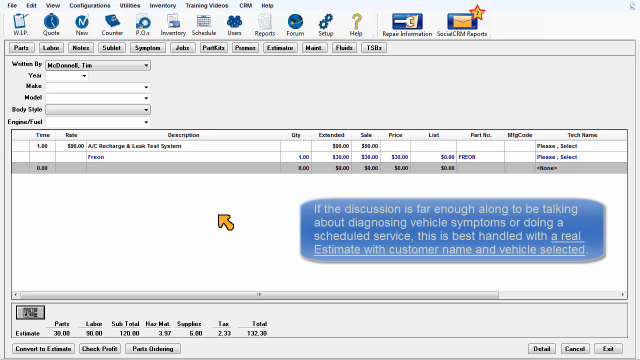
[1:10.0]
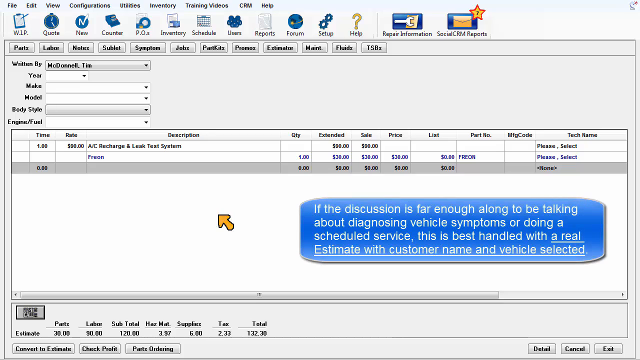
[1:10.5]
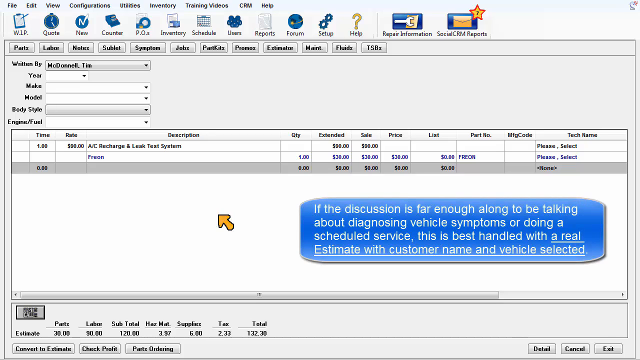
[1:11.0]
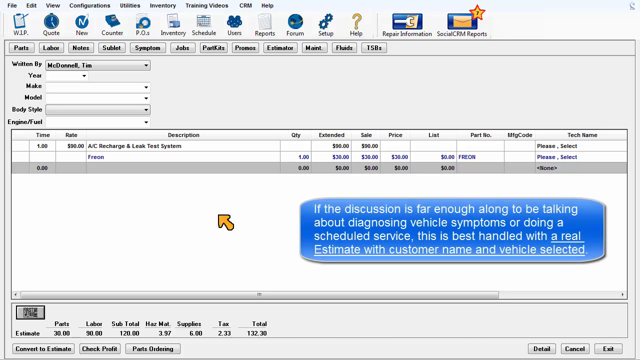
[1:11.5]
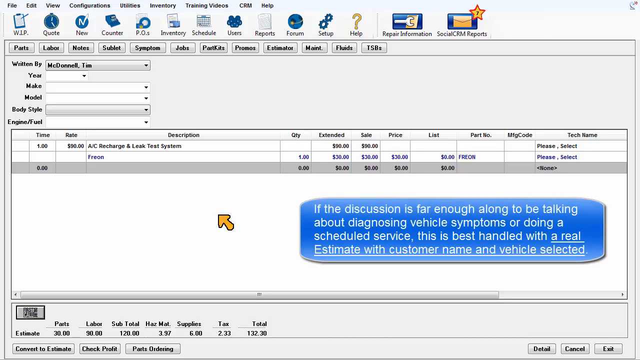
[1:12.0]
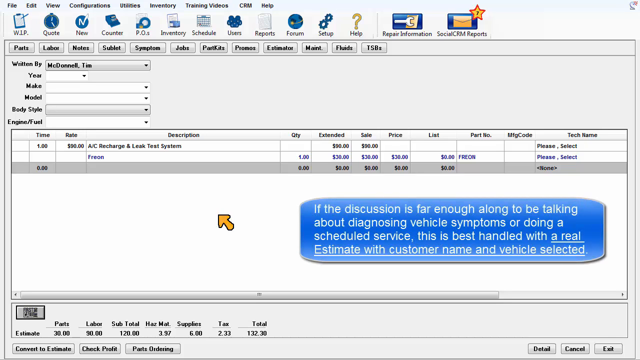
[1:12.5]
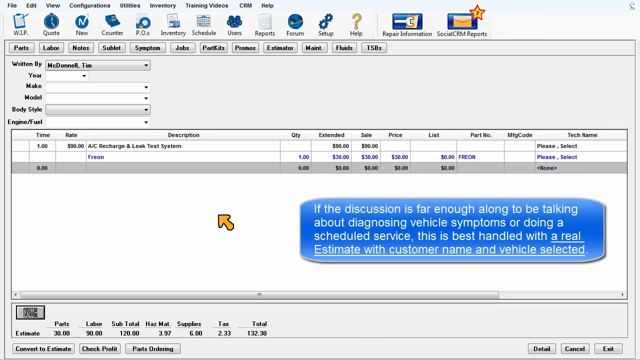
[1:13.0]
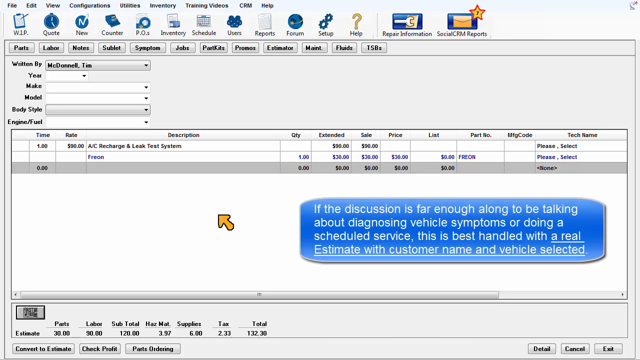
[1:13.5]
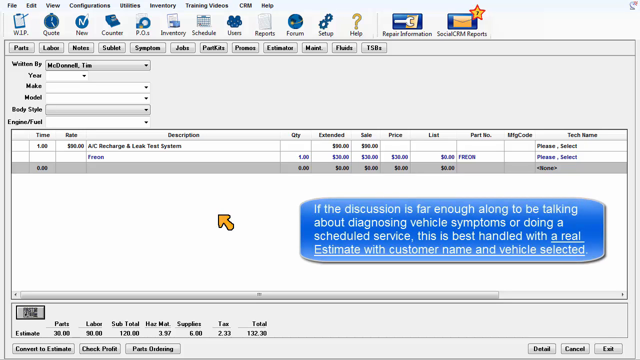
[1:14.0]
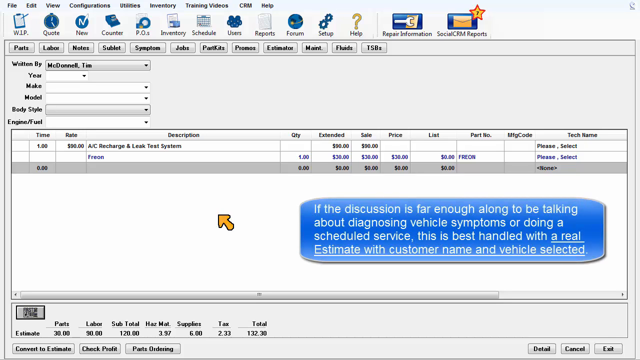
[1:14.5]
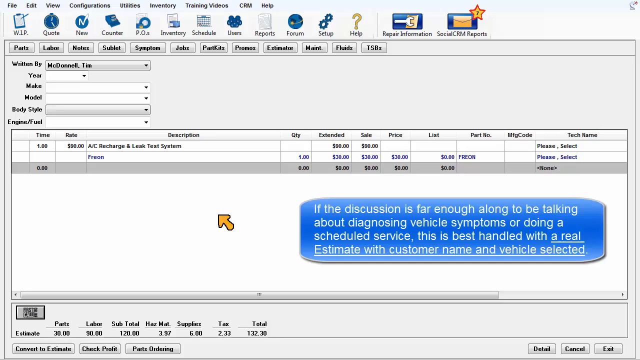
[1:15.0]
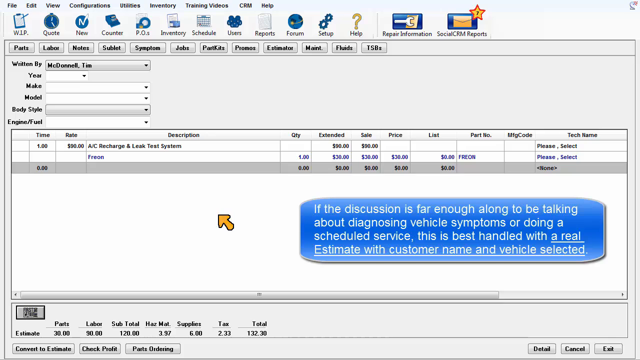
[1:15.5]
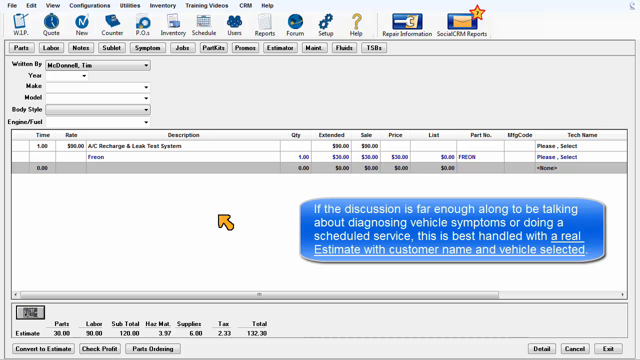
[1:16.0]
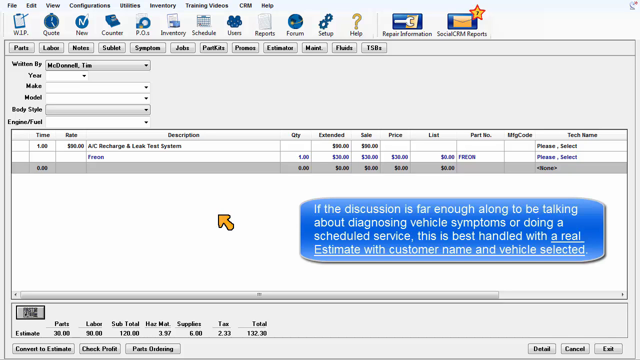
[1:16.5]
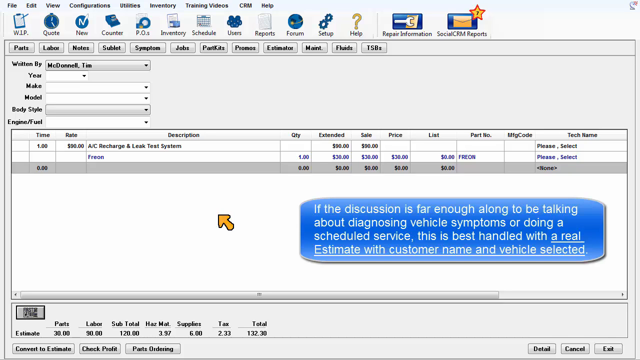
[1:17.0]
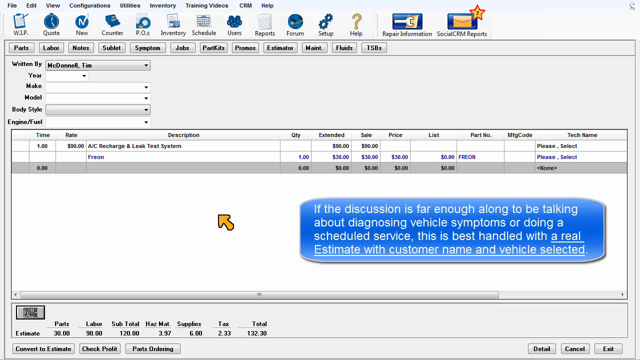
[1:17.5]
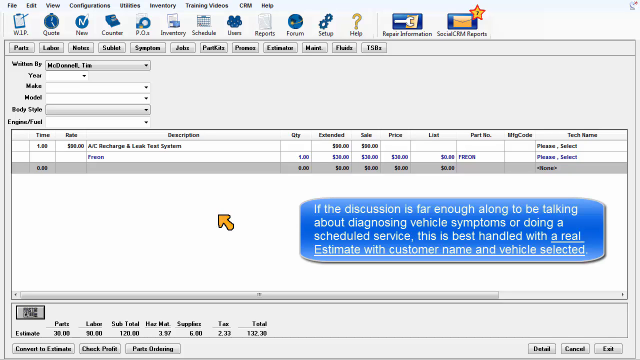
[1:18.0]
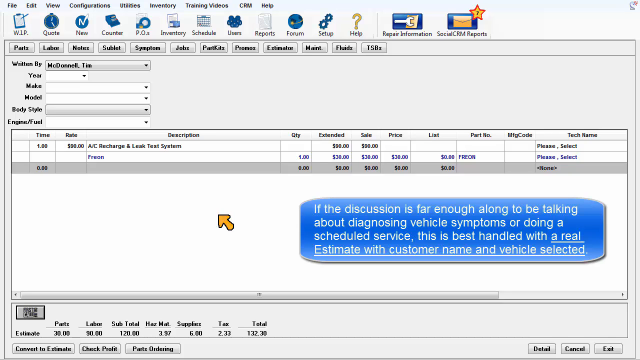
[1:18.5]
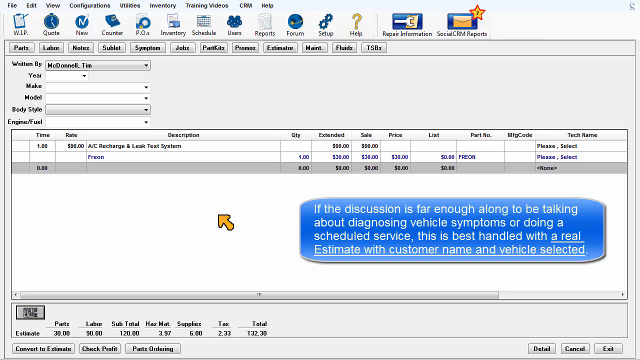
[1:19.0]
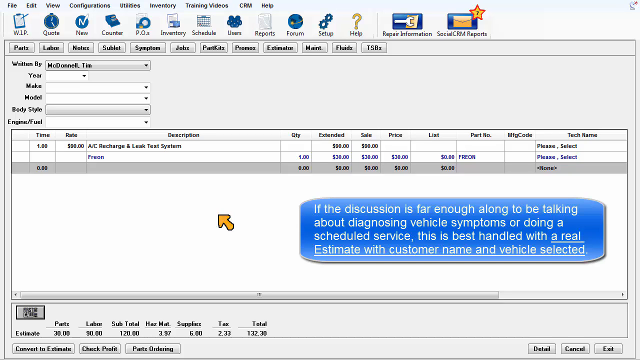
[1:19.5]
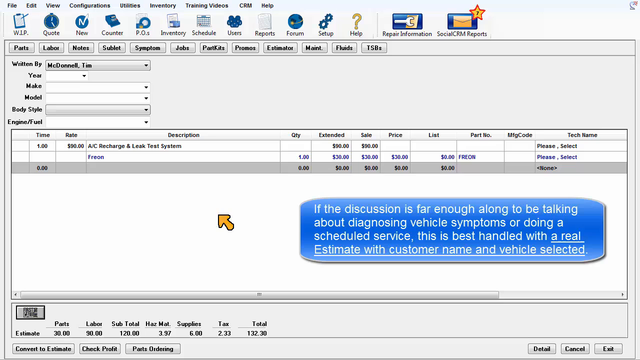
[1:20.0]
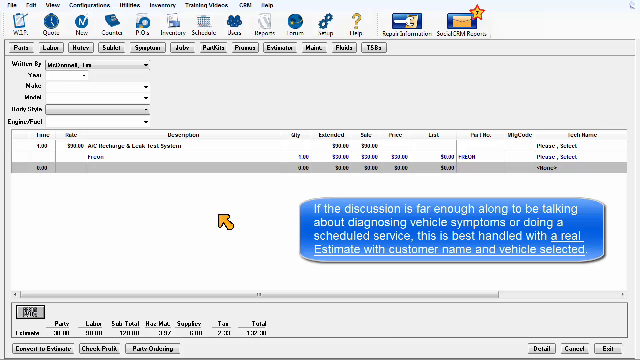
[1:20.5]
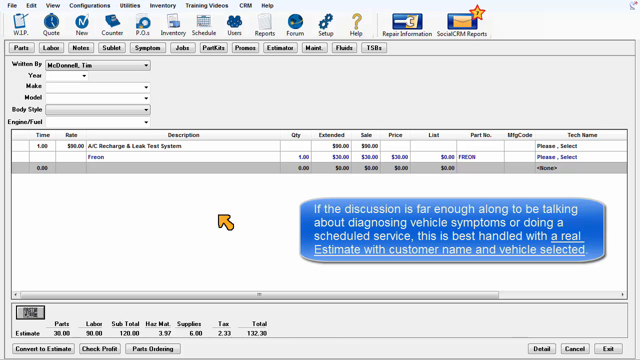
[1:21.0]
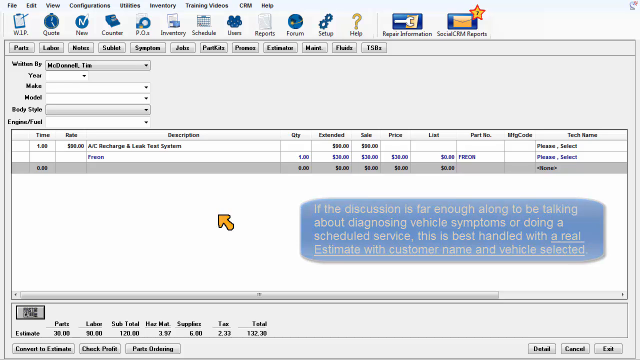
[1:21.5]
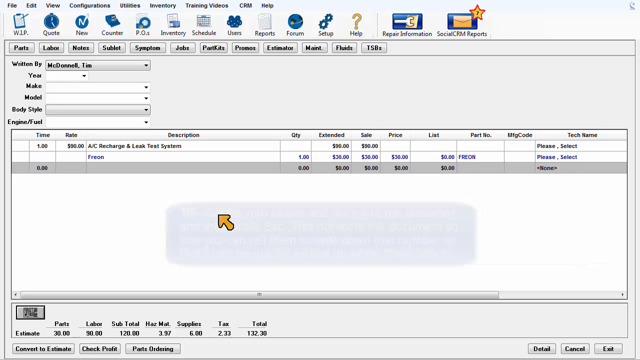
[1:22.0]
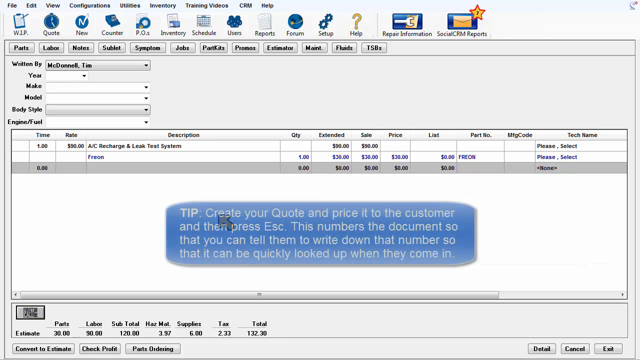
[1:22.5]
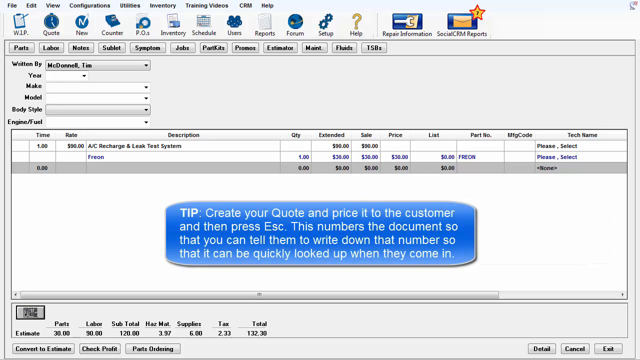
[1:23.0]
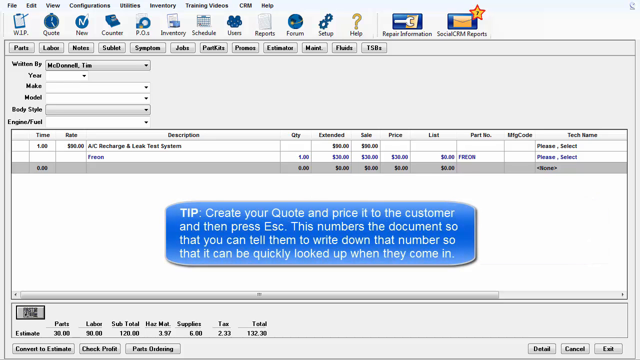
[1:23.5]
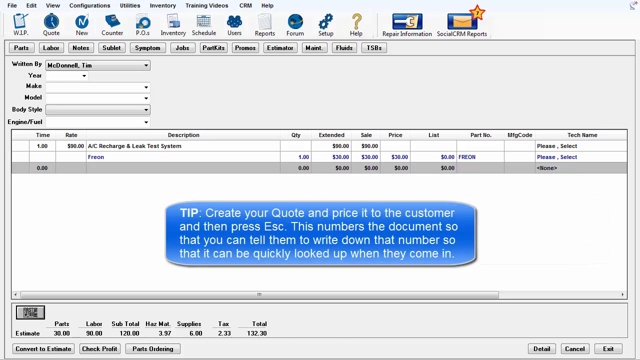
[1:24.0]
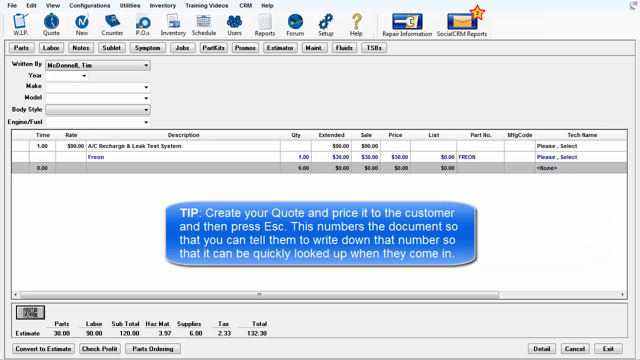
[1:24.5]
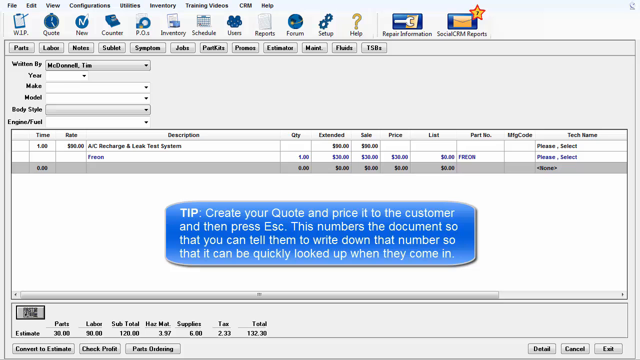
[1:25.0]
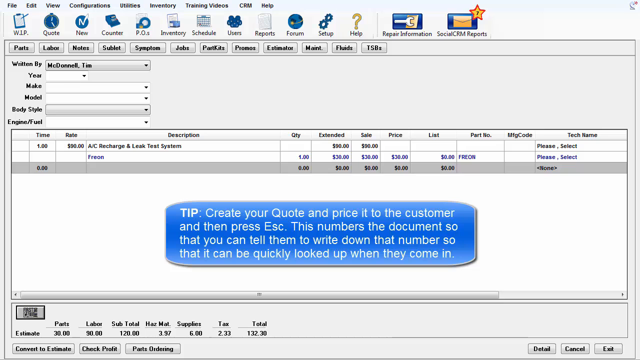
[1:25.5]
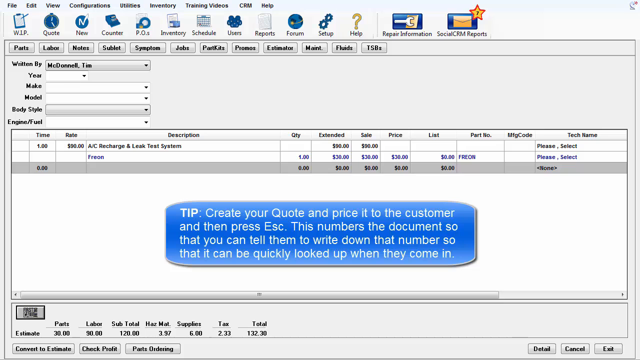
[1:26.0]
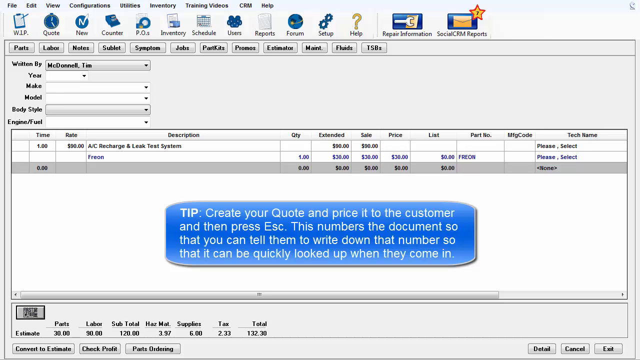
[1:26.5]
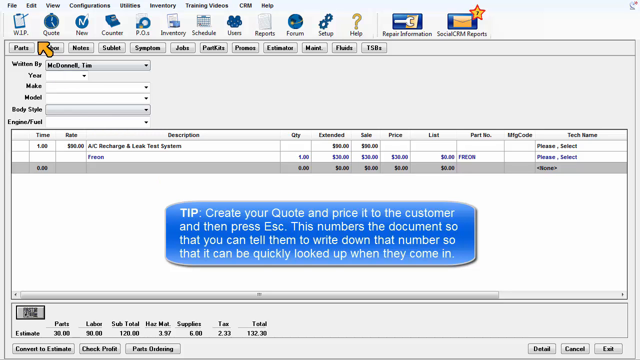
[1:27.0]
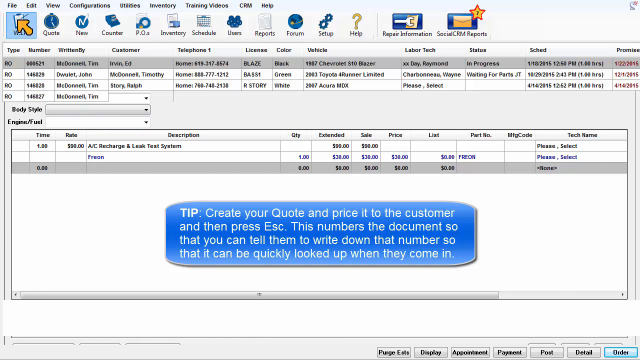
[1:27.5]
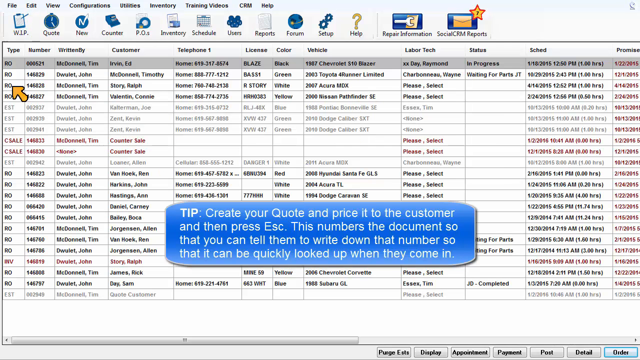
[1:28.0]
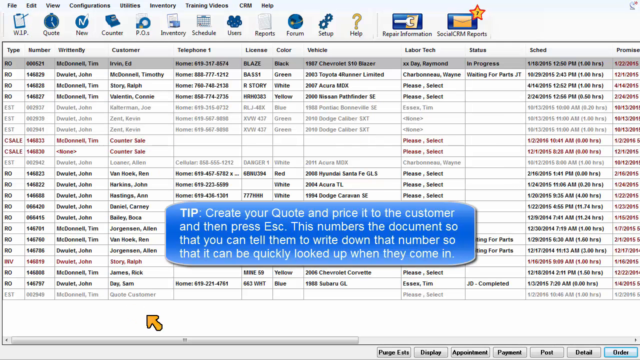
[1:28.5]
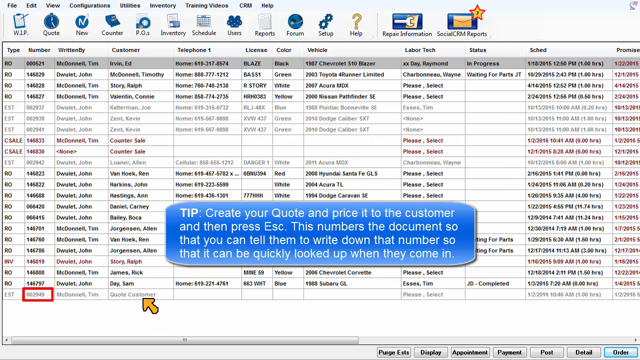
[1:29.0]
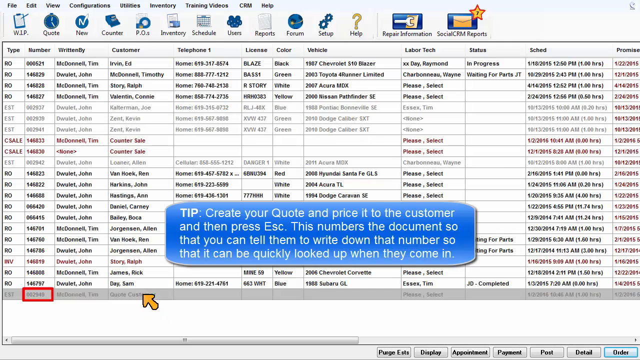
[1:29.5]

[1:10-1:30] The blue bubbles about quote entries being saved as estimates and potential customers committing to the estimated work remain, and more blue bubbles follow, reading "when they call back or come in, it will be possible to locate this quote by searching on your vehicle in the work in progress screen" and "these quote items can be converted to real orders with actual customer names should they come in to get that work done." In the software, a star with the number seven and a red outline is at the top right. Most of the software is colored blue, while the text is black. Fields on screen include "written by," "year," "make," "model," "body style" and "engine/fuel."